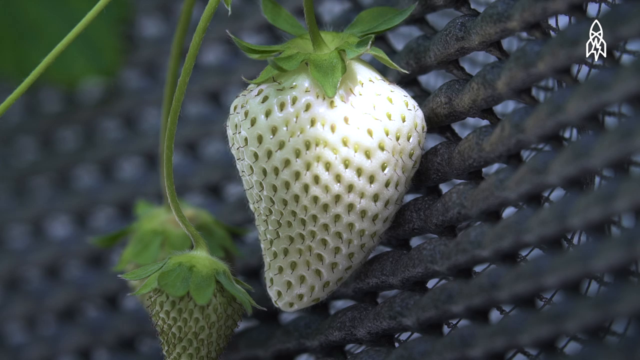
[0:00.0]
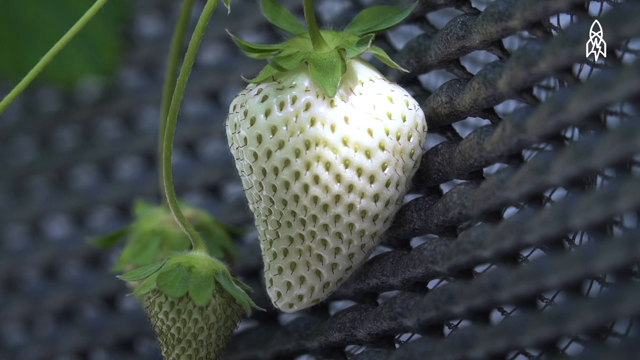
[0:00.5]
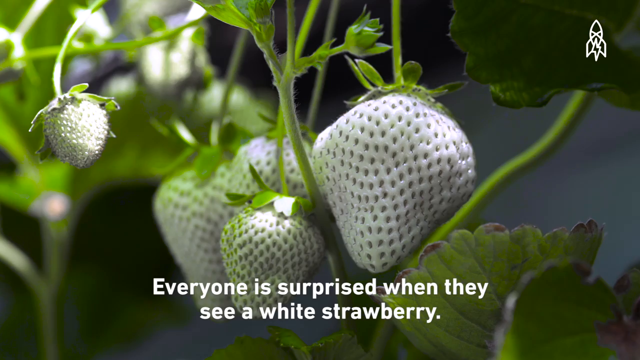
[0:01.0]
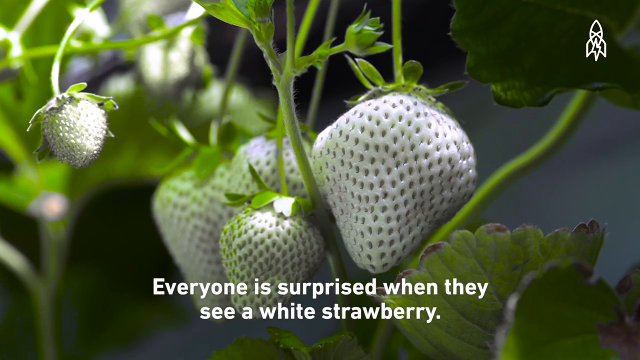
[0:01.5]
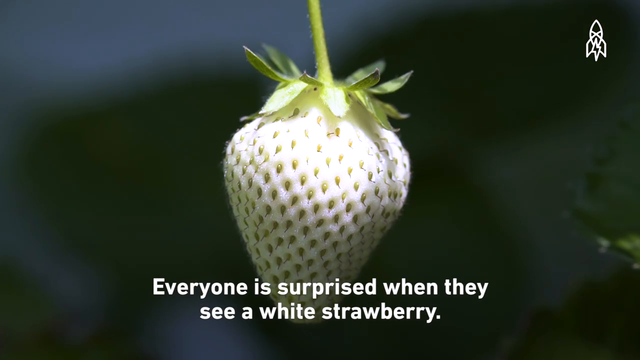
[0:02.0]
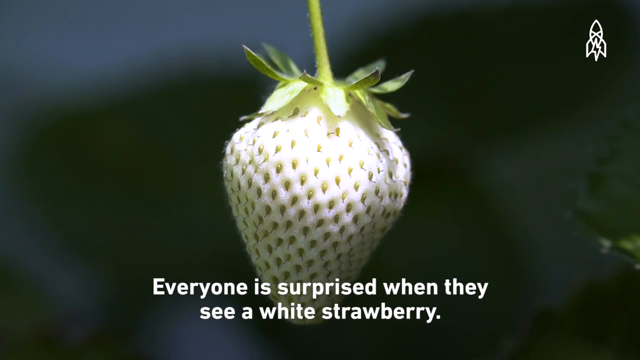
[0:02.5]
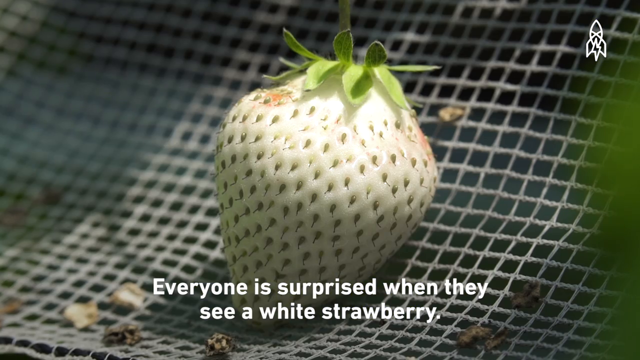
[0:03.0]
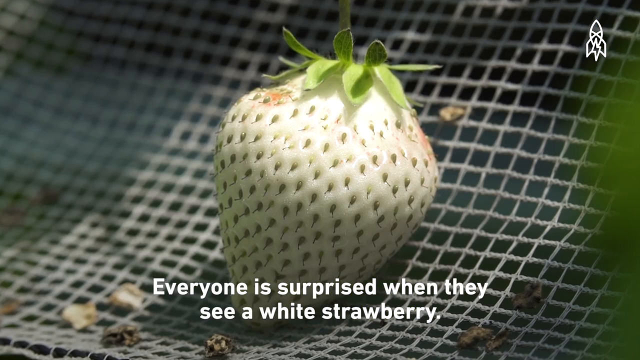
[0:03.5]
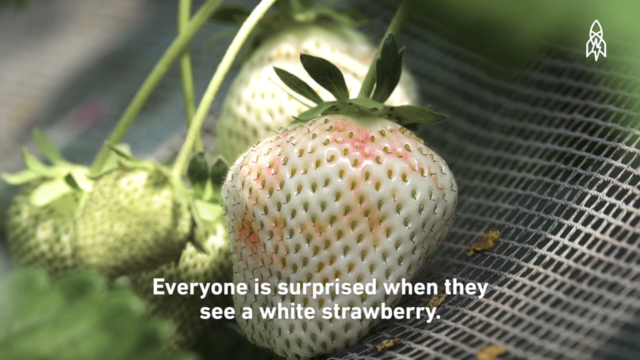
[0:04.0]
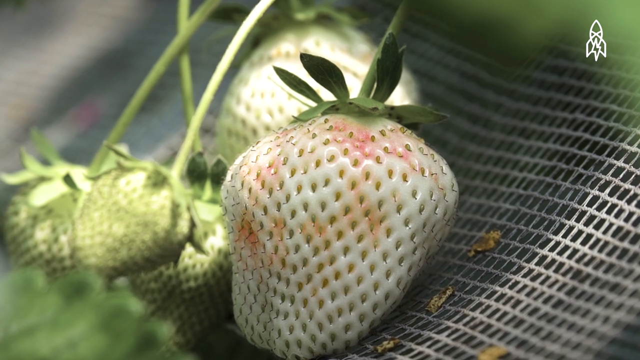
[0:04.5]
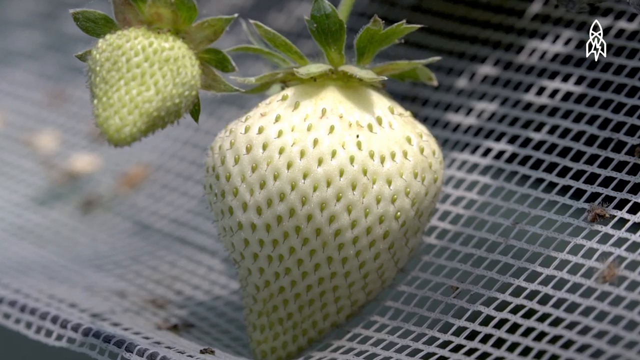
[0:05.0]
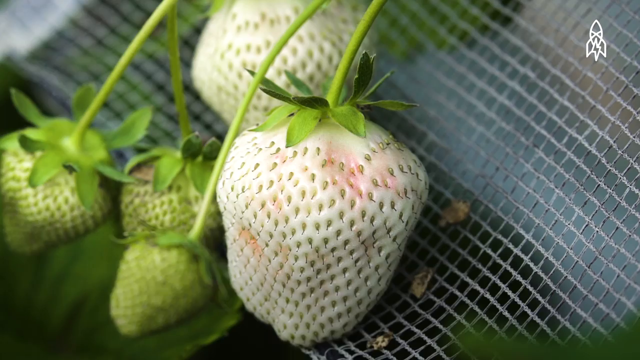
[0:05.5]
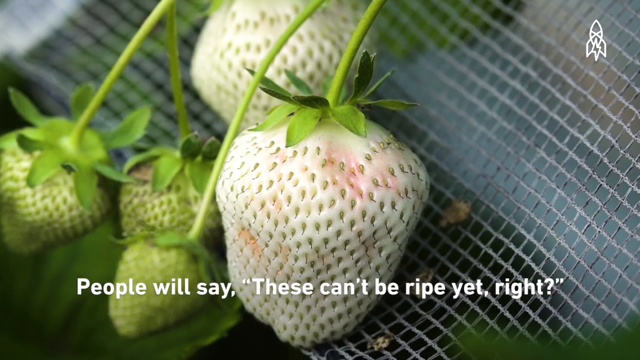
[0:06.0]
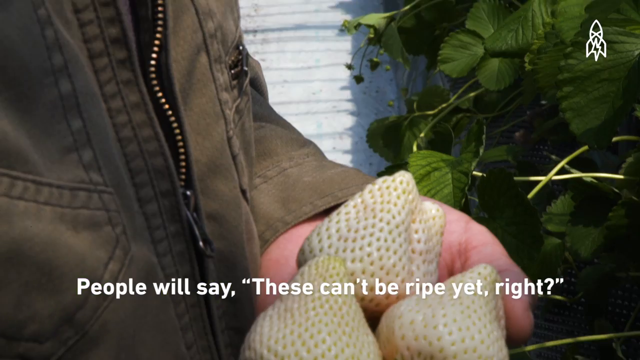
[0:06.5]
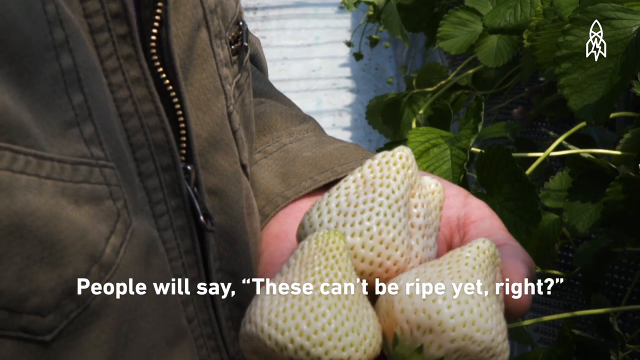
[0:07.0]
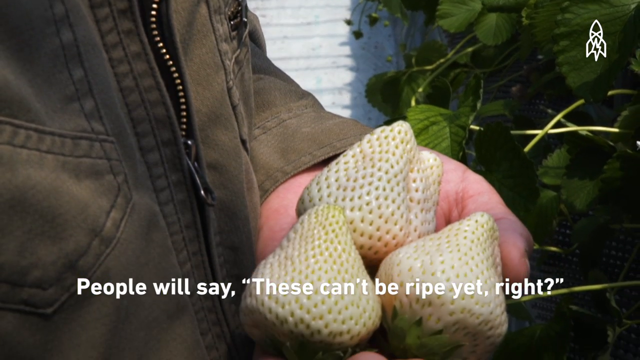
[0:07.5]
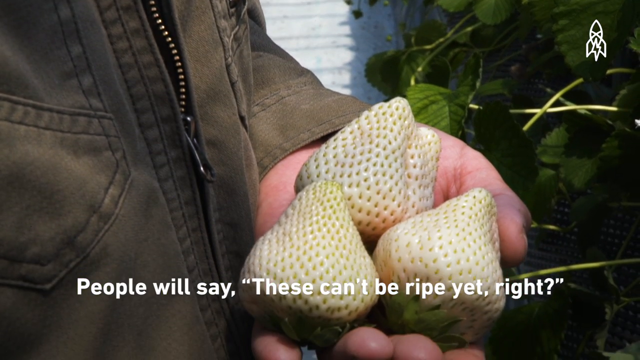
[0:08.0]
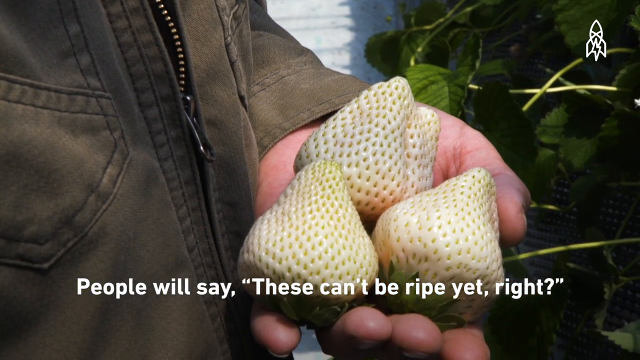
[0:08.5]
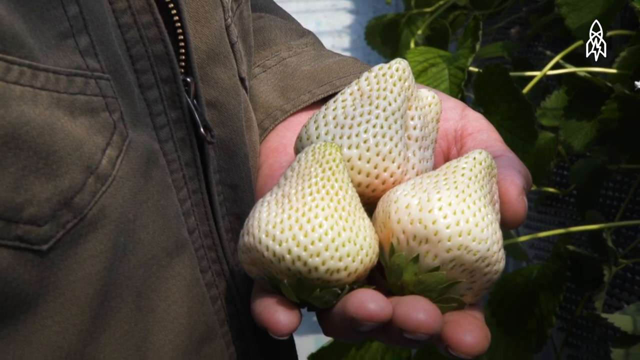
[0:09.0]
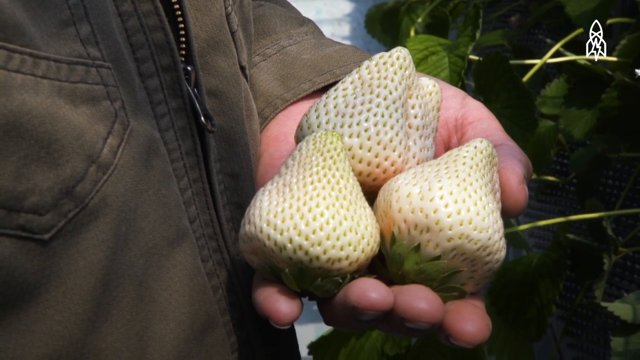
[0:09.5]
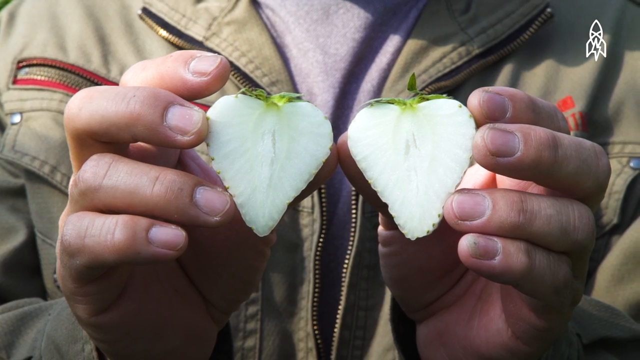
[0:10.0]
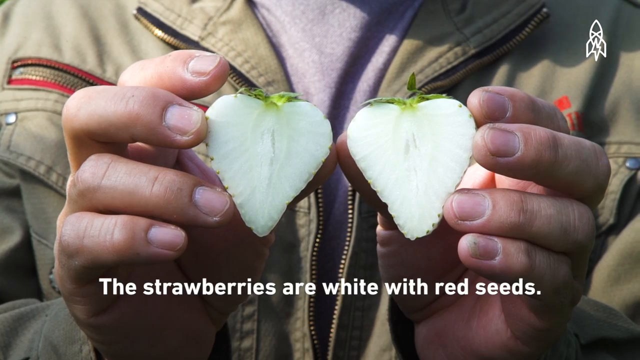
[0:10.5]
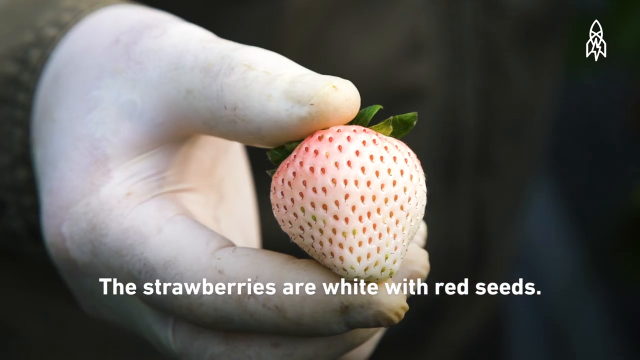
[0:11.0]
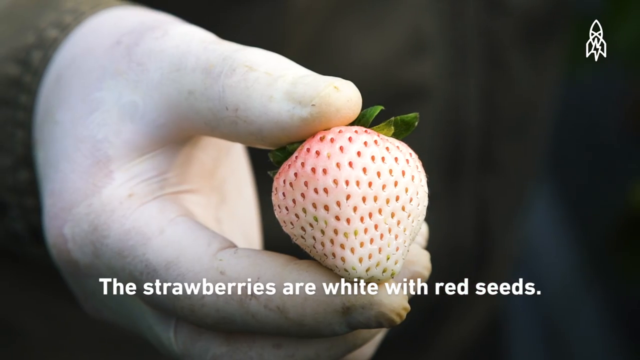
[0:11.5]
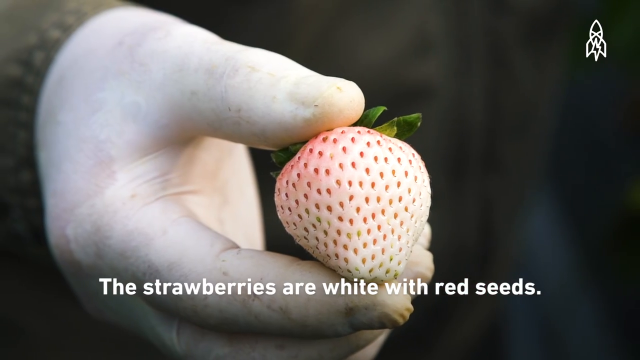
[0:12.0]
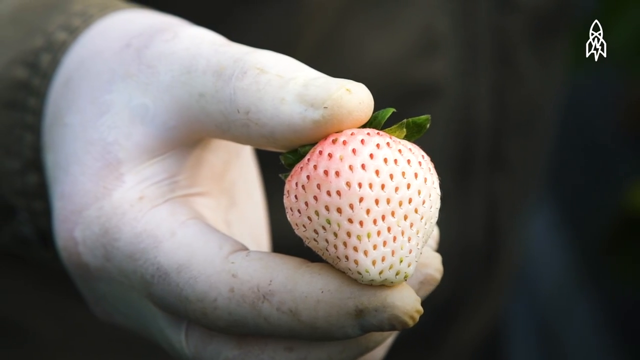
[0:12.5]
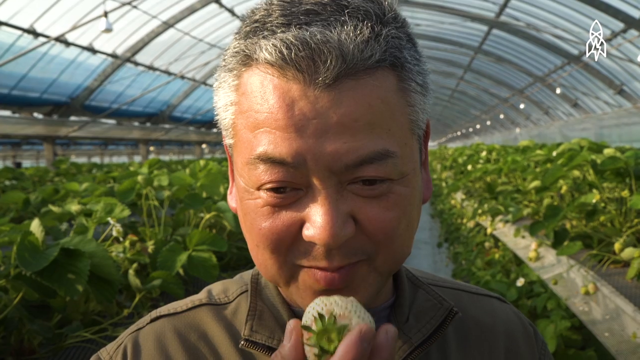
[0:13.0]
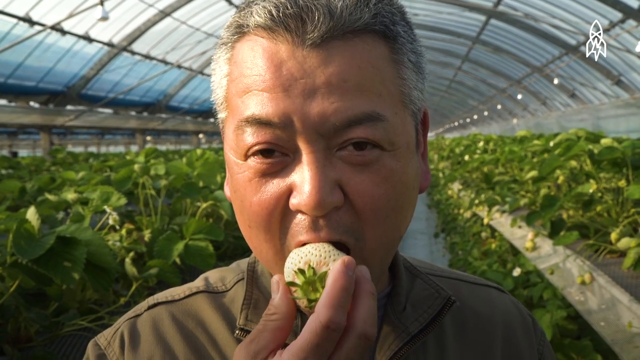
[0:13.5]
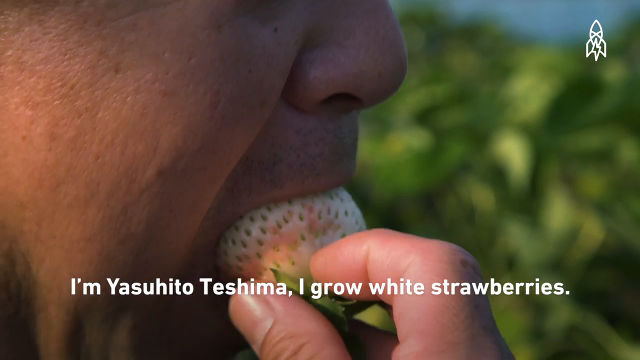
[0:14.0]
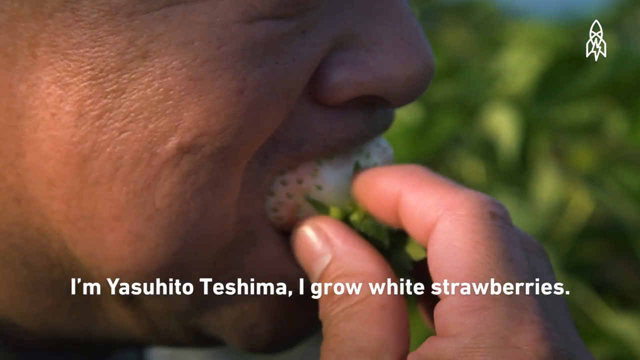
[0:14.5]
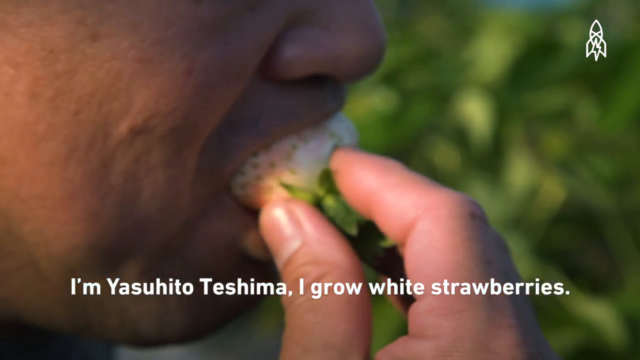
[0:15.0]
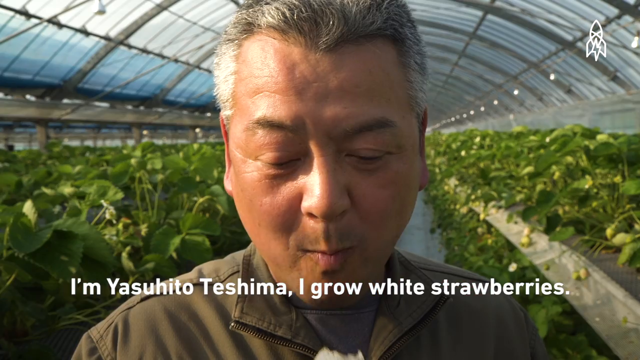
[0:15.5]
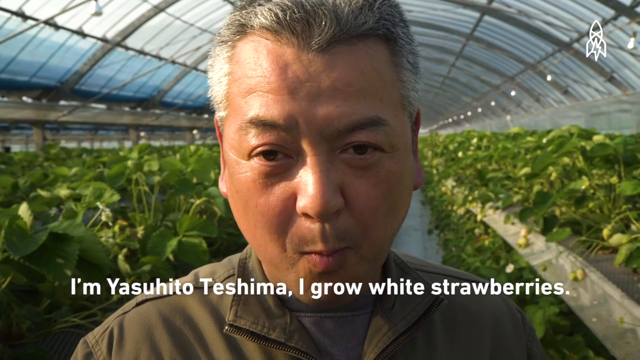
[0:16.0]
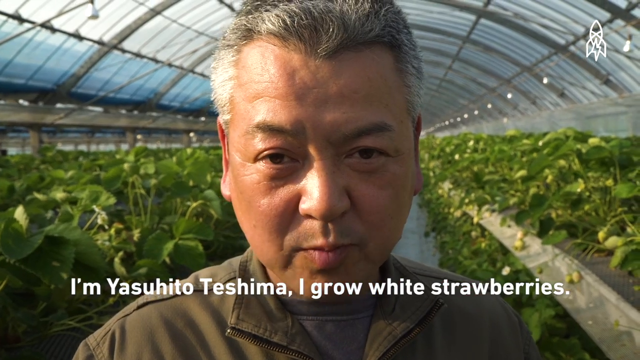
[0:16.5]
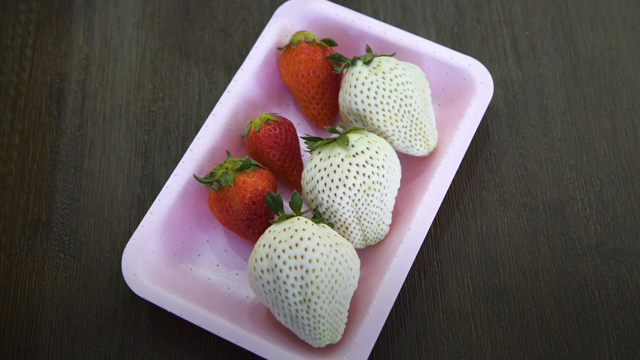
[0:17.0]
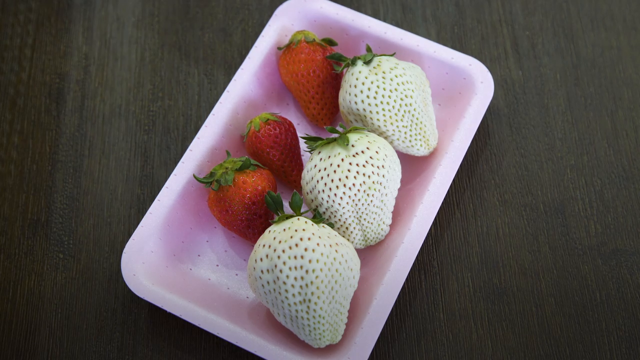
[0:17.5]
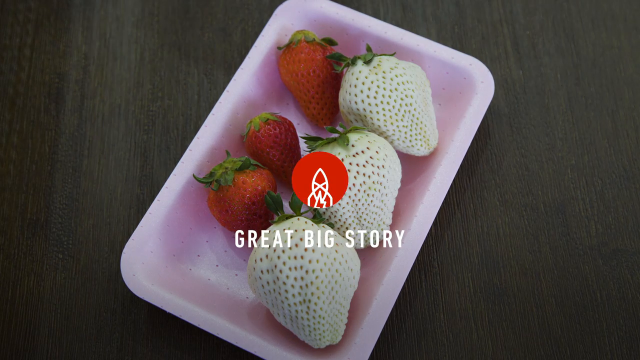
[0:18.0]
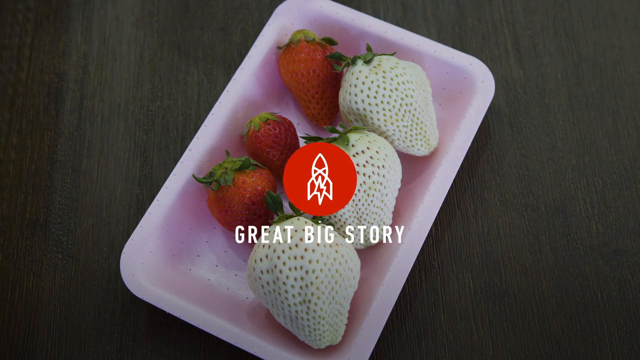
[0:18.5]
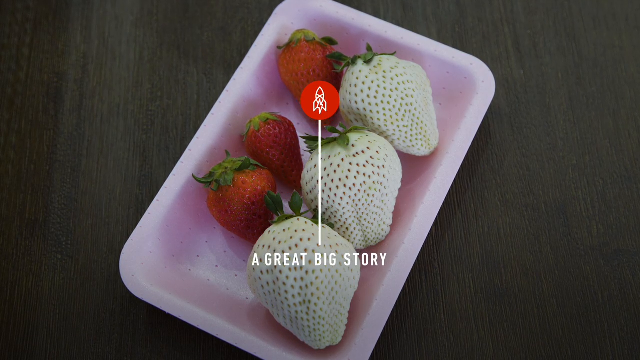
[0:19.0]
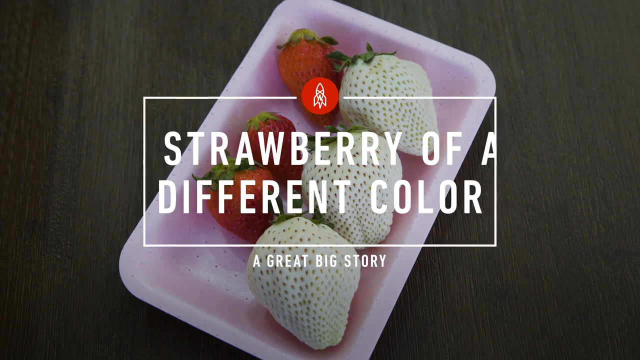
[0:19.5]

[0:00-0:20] The video appears to be the start of a documentary about Japanese white strawberries, centred on a farmer named Yasuhiro Tashima, who seems to be describing his white strawberry farm. He holds a sliced strawberry and demonstrates eating the strawberries. The strawberries are on stems with green leaves; they are mostly white with green seeds and heart-shaped. He seems very proud of his greenhouse and growing practices. The story is titled A Strawberry of a Different Color. A red subscribe button is in the bottom right corner.